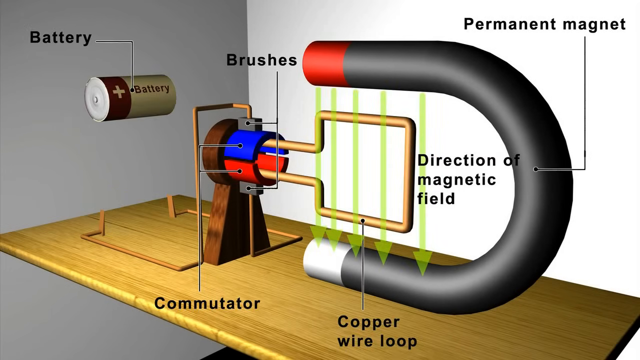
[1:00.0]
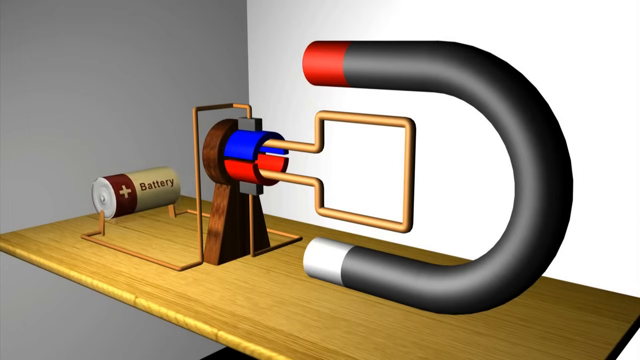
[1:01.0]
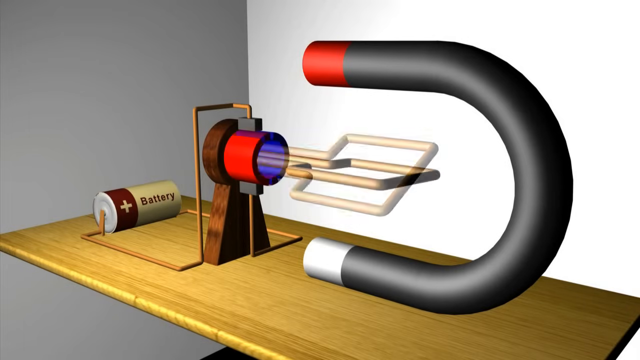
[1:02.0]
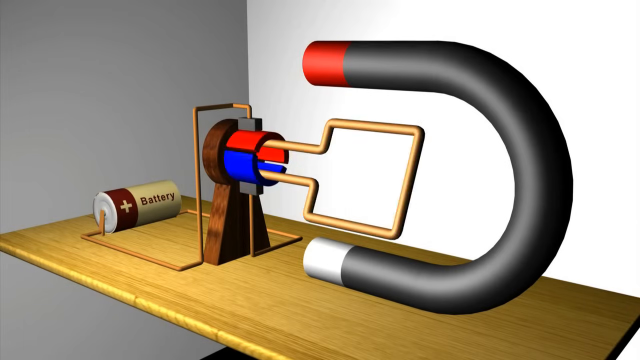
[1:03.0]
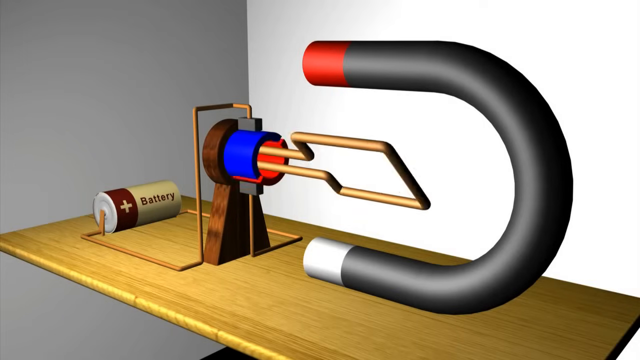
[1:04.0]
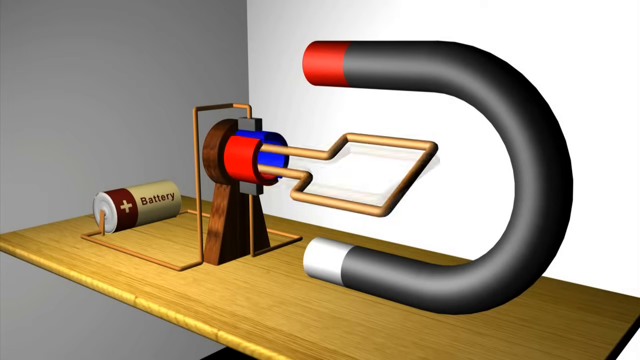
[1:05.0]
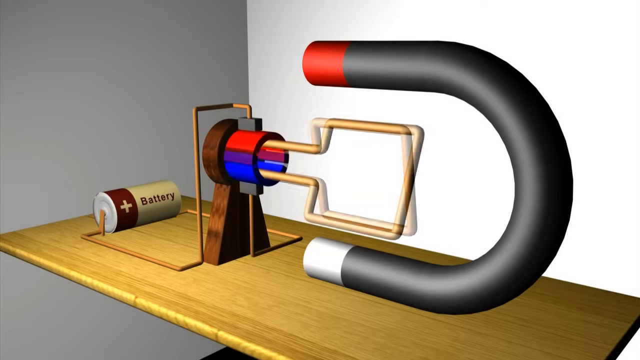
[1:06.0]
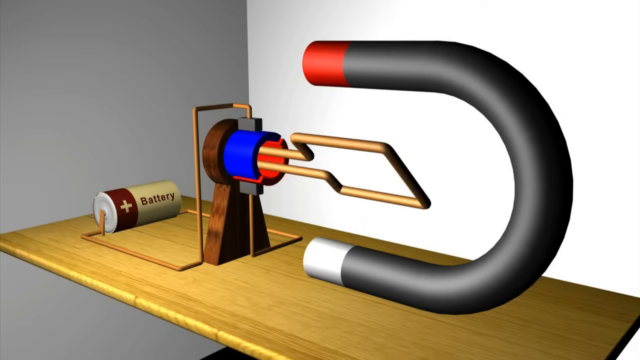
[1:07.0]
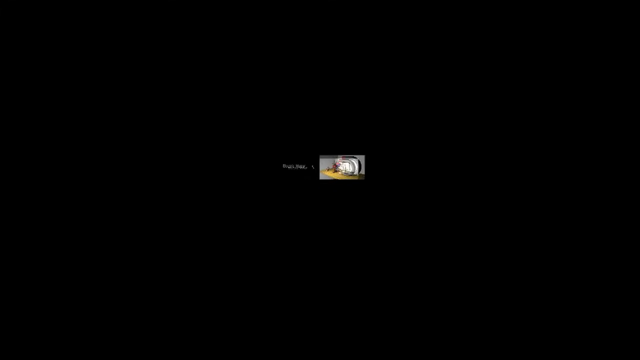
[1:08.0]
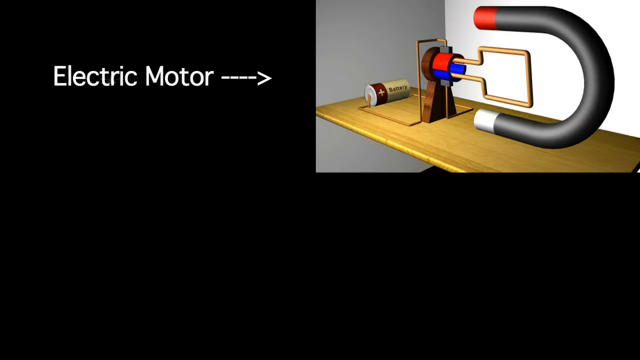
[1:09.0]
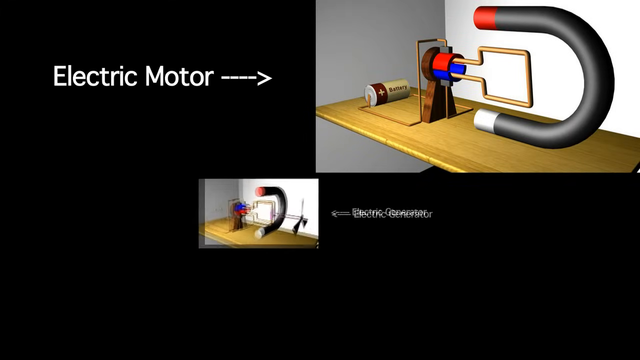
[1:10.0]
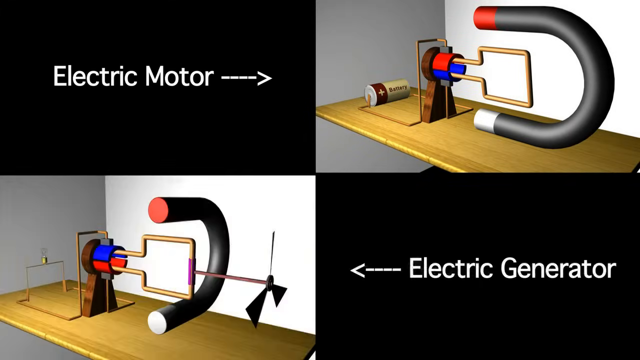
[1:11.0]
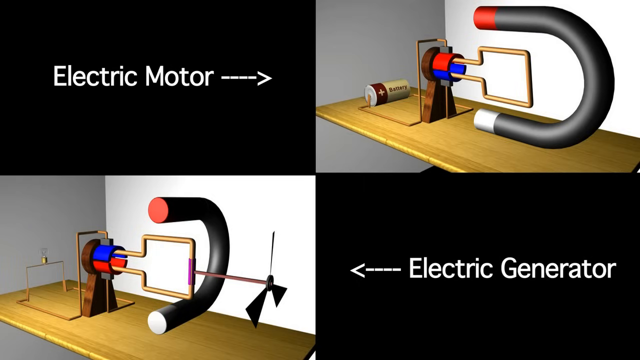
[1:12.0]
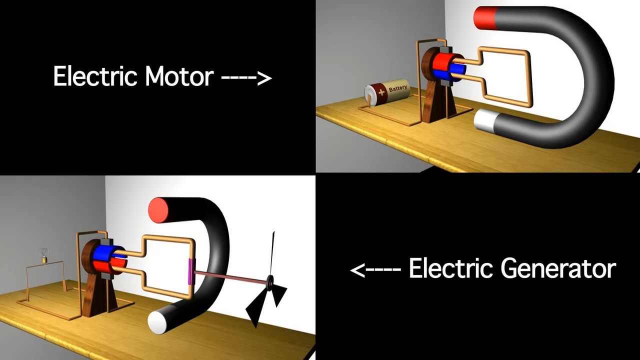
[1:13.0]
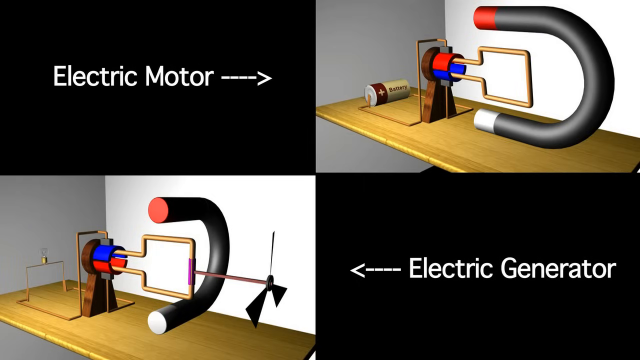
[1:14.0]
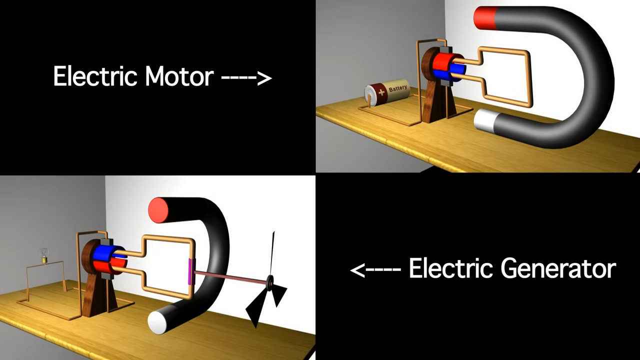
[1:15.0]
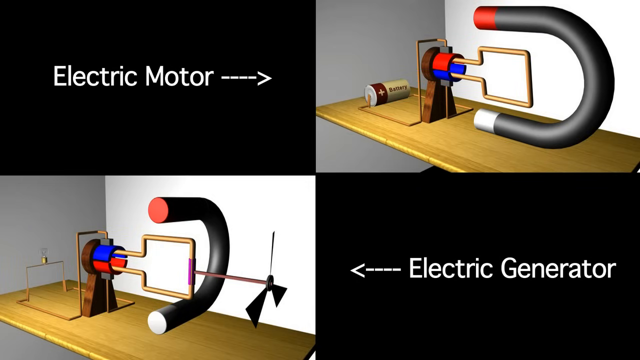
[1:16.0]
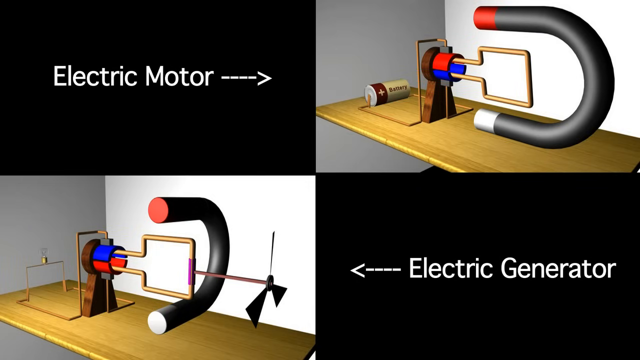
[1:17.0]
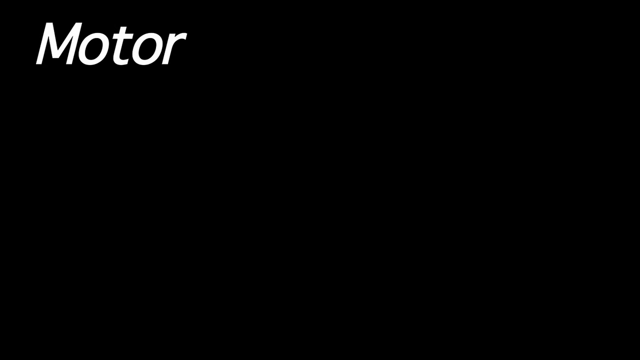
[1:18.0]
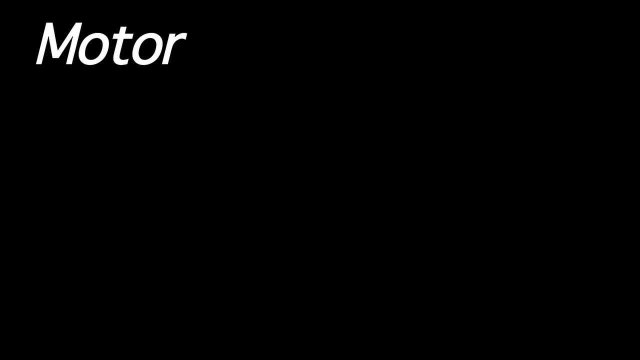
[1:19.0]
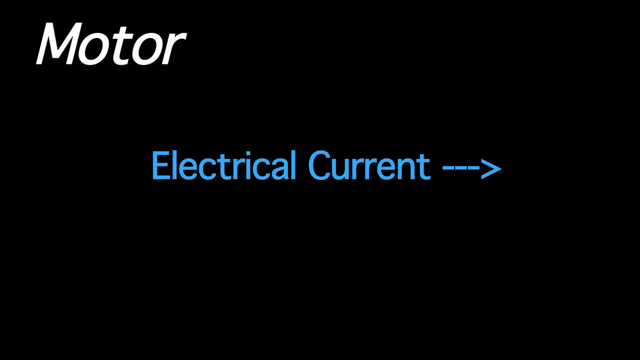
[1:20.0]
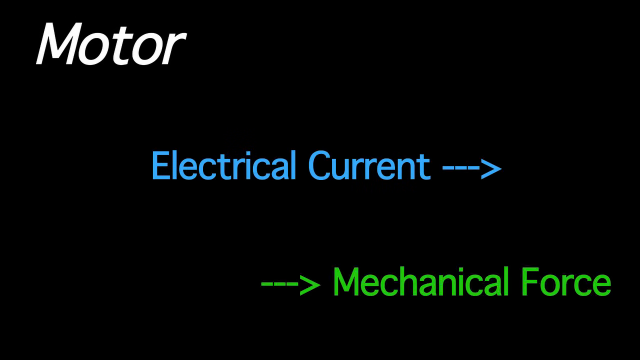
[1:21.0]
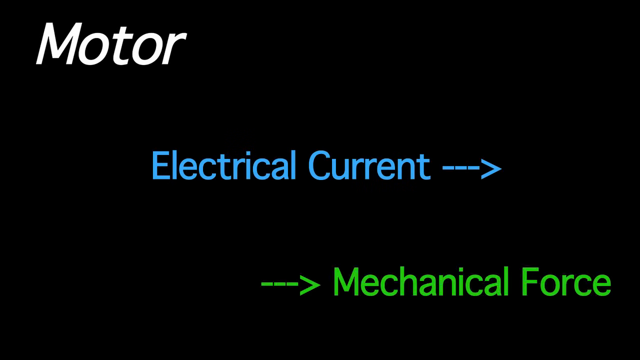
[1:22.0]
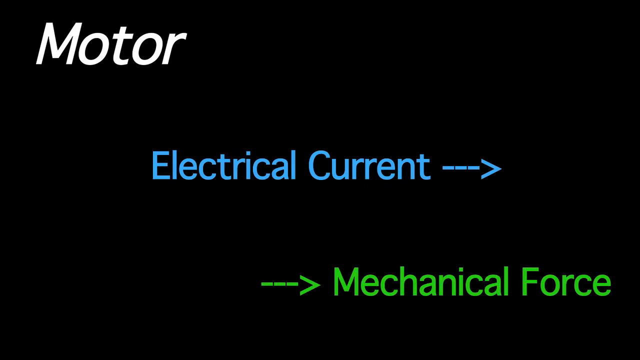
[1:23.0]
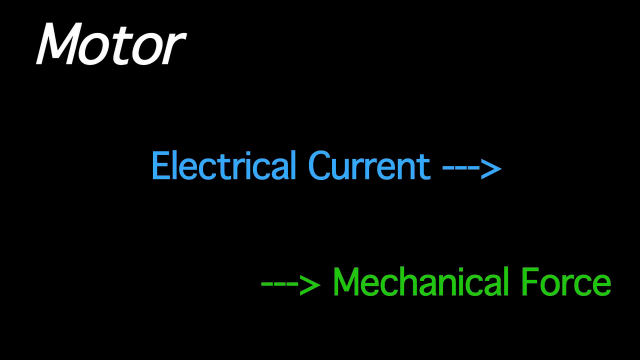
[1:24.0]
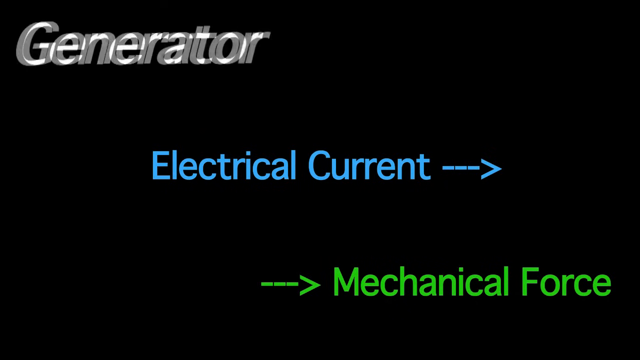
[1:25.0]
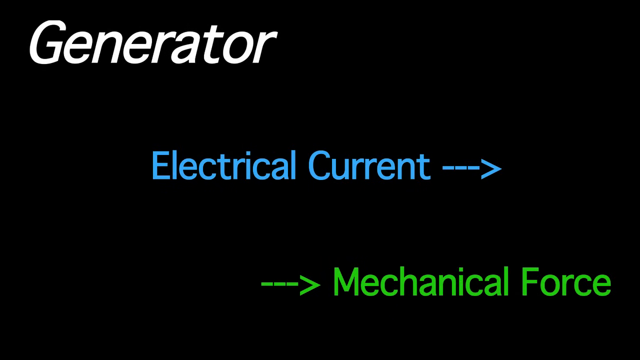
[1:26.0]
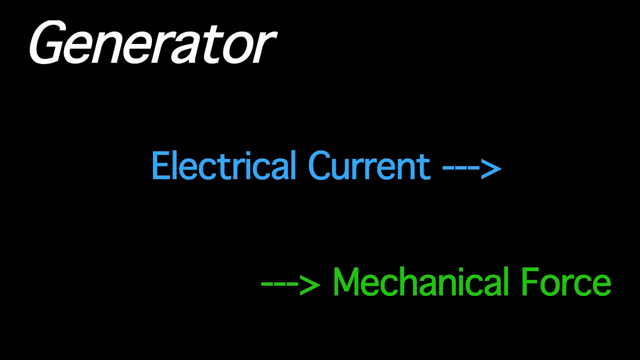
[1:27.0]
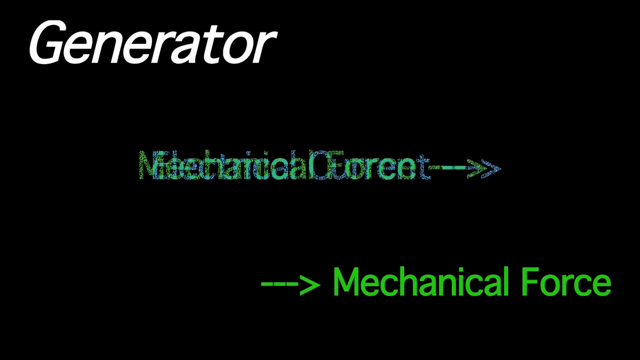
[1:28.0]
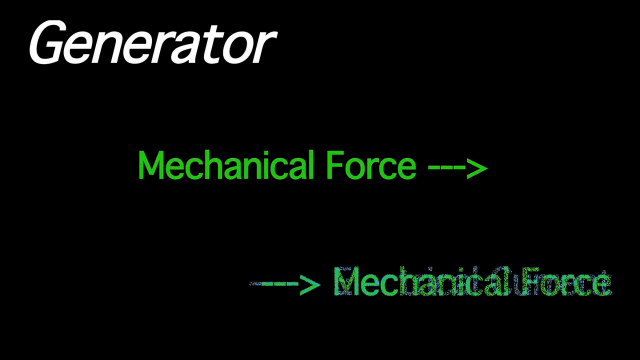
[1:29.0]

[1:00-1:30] From the still diagram, the battery starts to drop onto the platform again and the copper wire loop starts spinning again, showing the animated version once more, spinning downwards. The screen turns black for a split second and a still image of the diagram appears, with the text "electric motor" on a black square in the top left, pointing right toward the diagram. At the bottom of the screen there are two more images. The bottom right one says "electric generator" on black and points to the left image. The left image is similar to the diagram but looks a little different: the magnet is sideways, and among a few other differences there is a fan connected to the copper wire loop. Next comes a black screen with the word "motor" in white text in the top left, the words "electrical current" in blue in the center pointing to the right, and the words "mechanical force" in the bottom right with a green arrow also pointing to the right. The word "motor" falls over to the right and disappears off the screen, replaced by the word "generator". The words below swap places: "electrical current" moves to the bottom right and "mechanical force" moves to the middle.